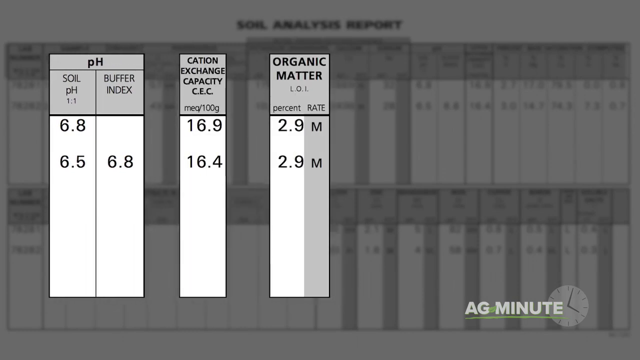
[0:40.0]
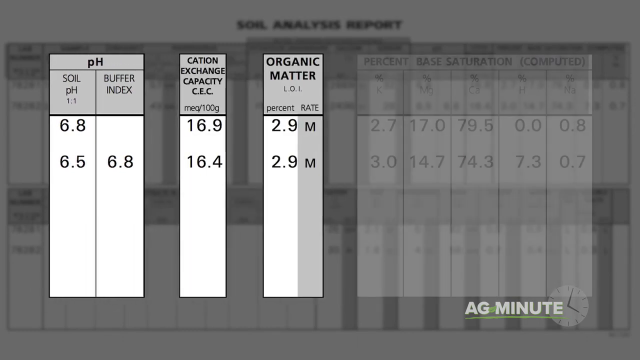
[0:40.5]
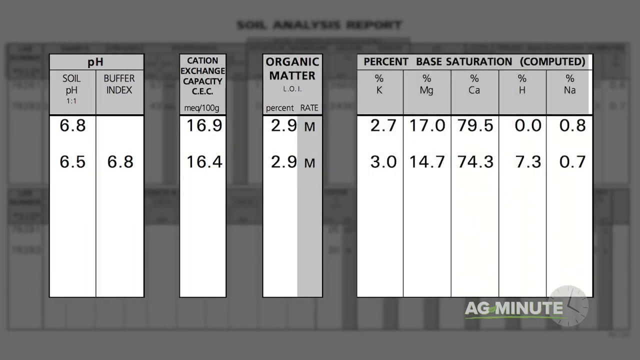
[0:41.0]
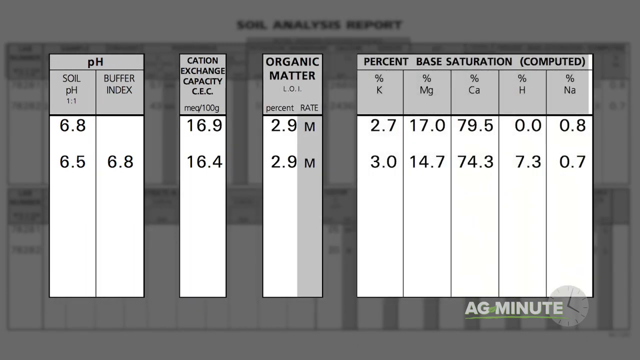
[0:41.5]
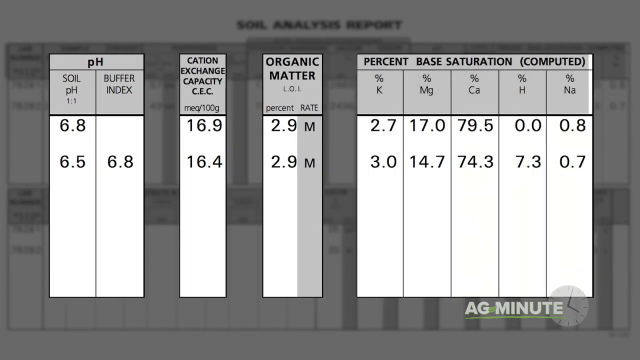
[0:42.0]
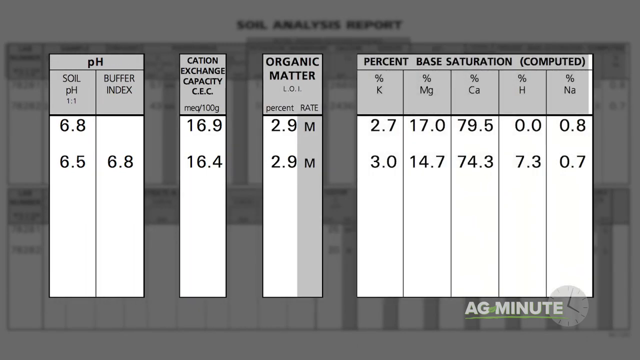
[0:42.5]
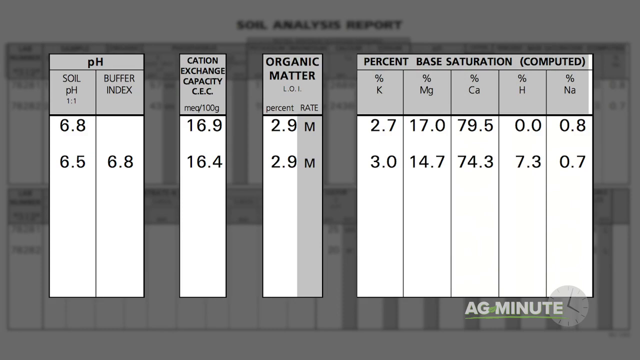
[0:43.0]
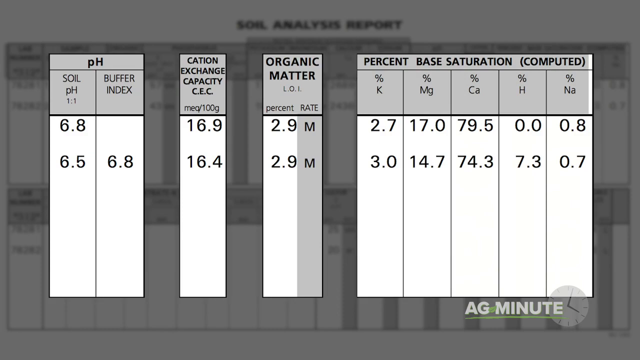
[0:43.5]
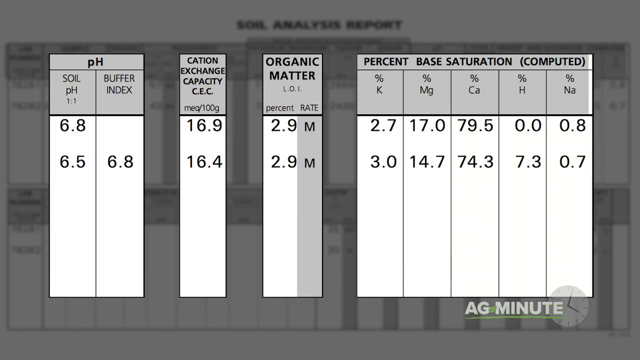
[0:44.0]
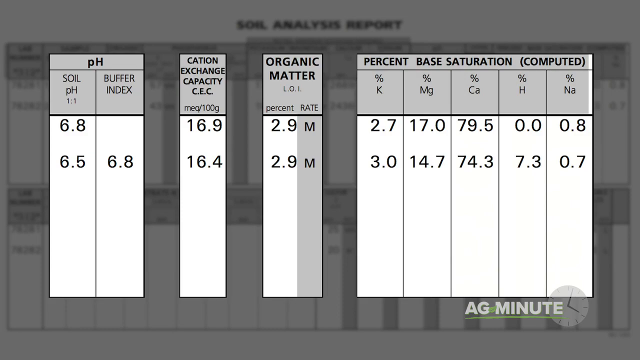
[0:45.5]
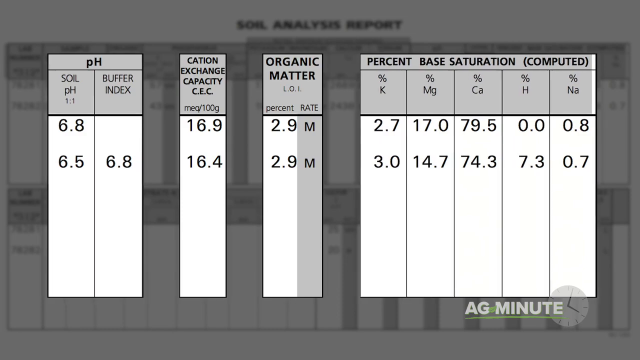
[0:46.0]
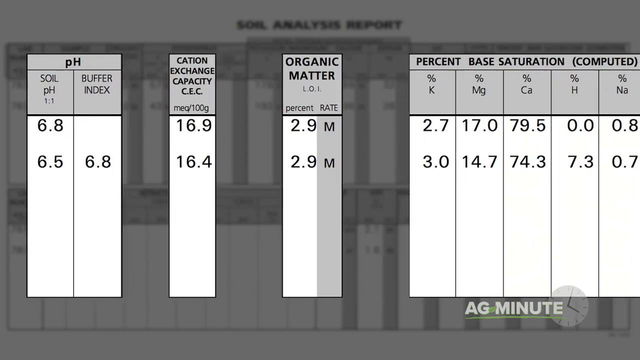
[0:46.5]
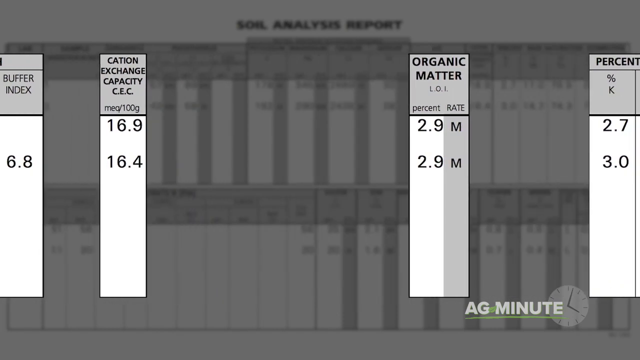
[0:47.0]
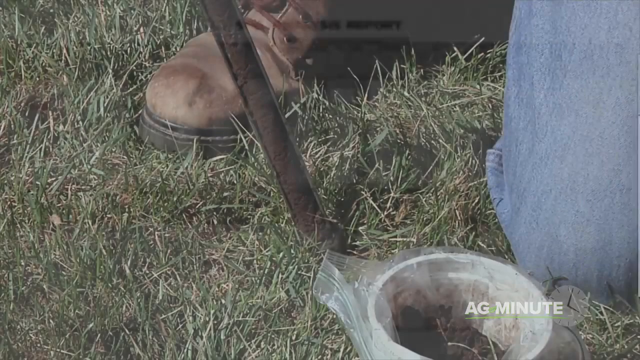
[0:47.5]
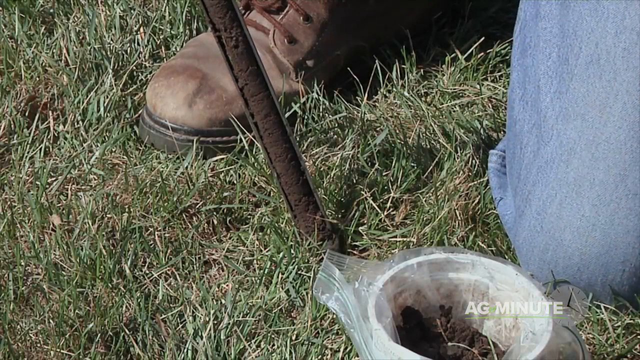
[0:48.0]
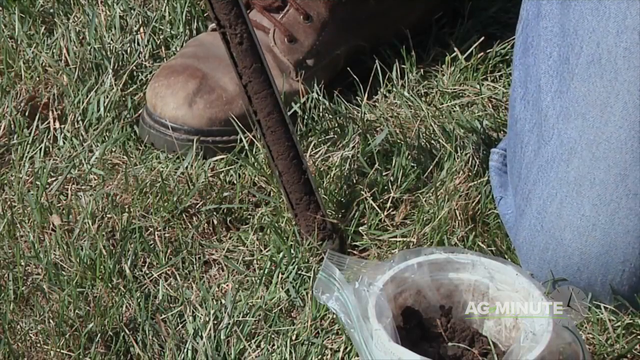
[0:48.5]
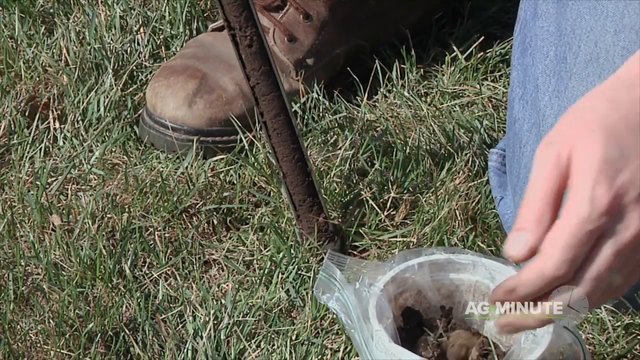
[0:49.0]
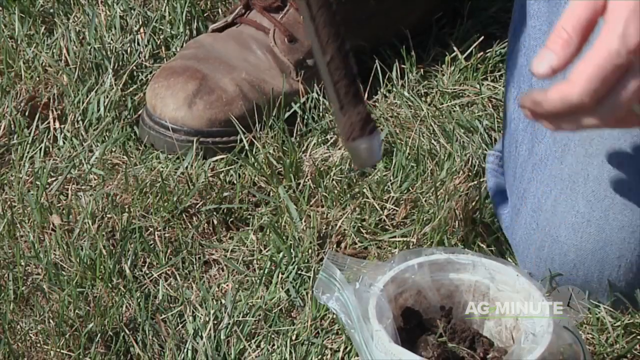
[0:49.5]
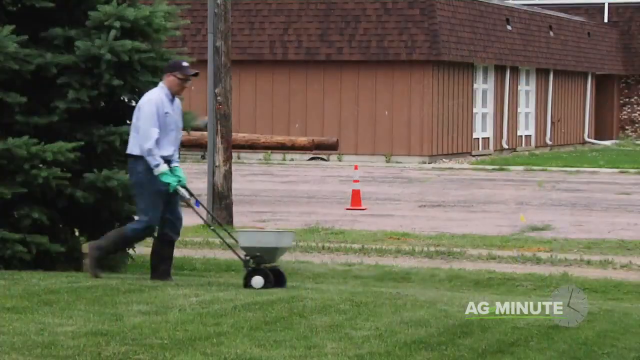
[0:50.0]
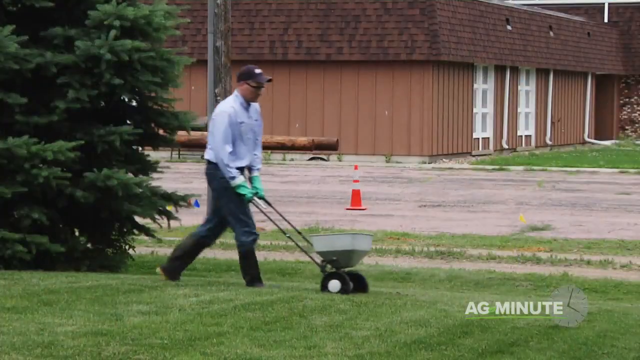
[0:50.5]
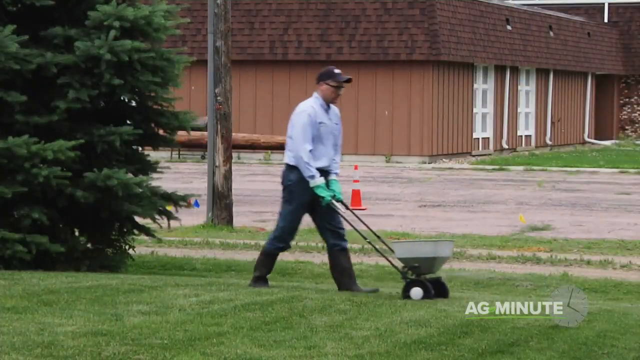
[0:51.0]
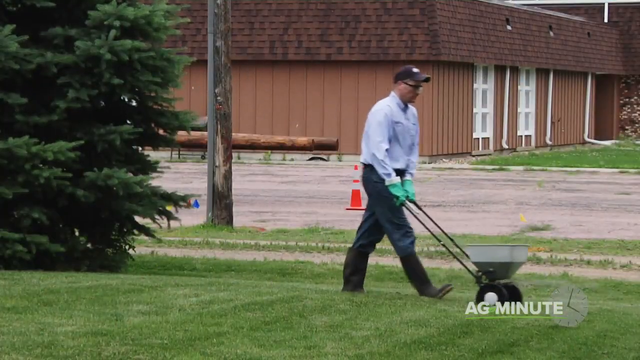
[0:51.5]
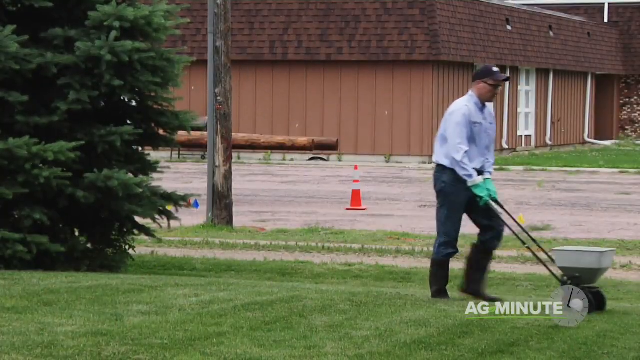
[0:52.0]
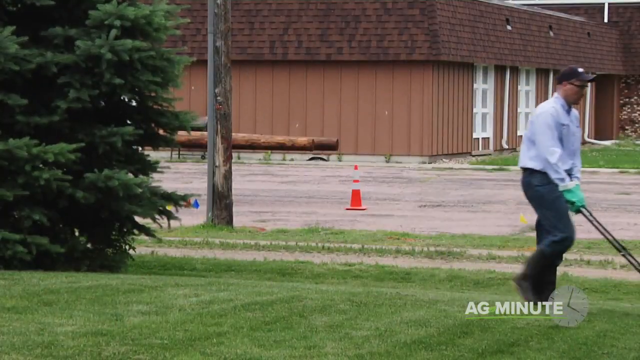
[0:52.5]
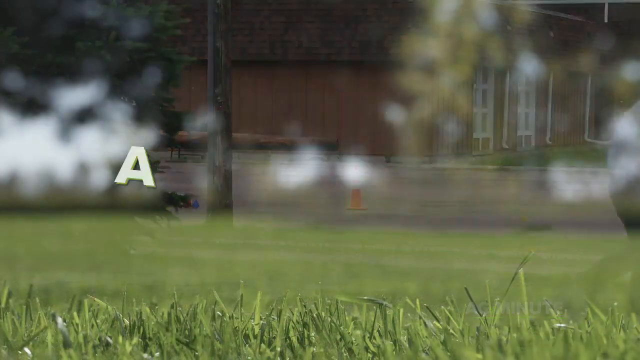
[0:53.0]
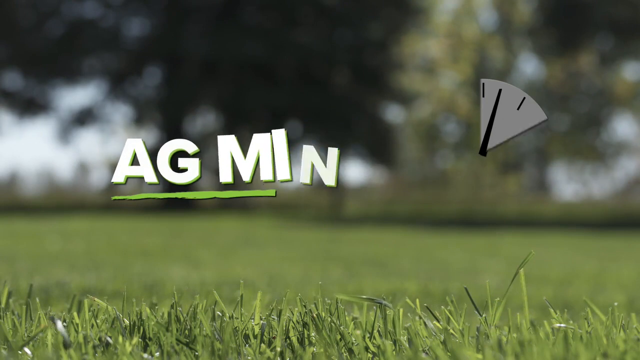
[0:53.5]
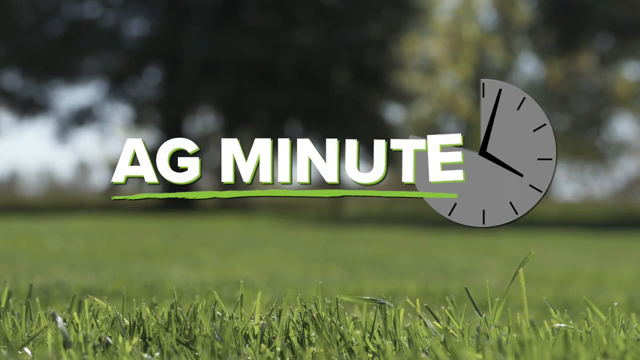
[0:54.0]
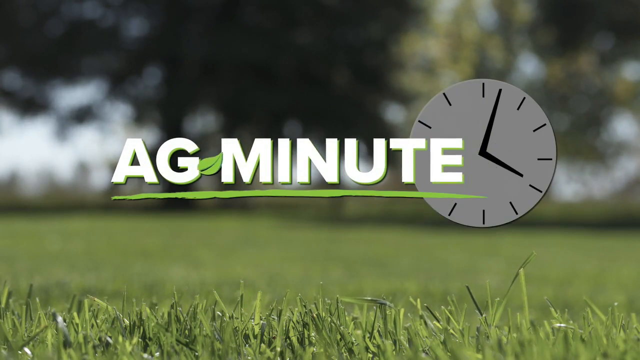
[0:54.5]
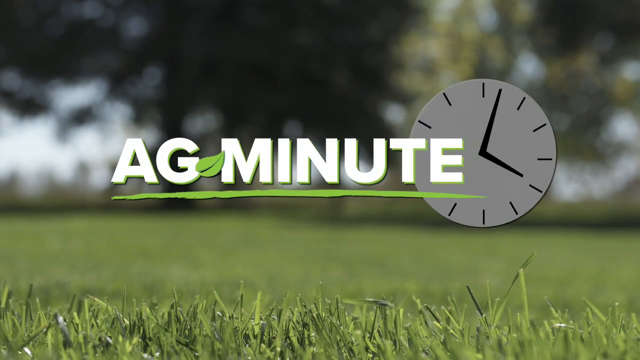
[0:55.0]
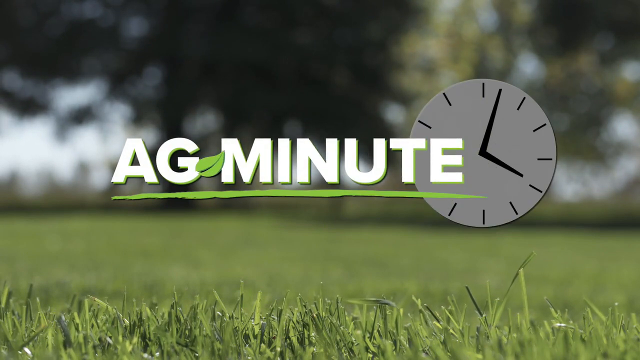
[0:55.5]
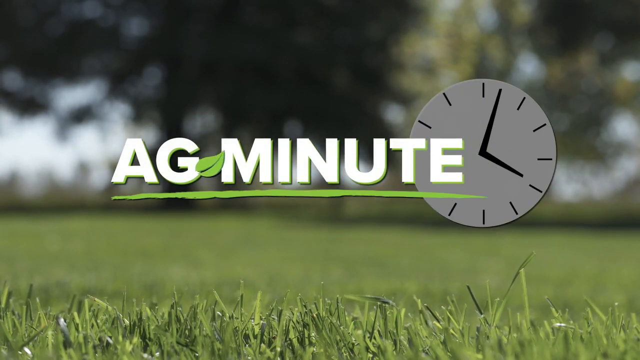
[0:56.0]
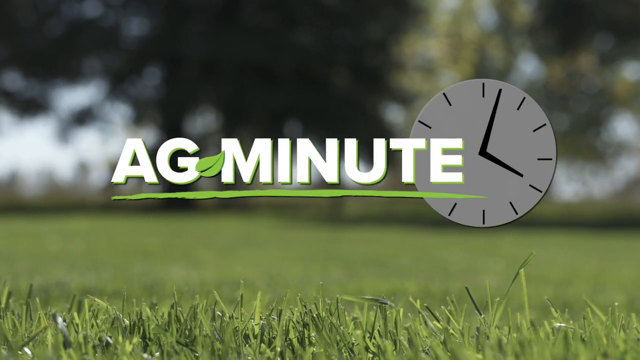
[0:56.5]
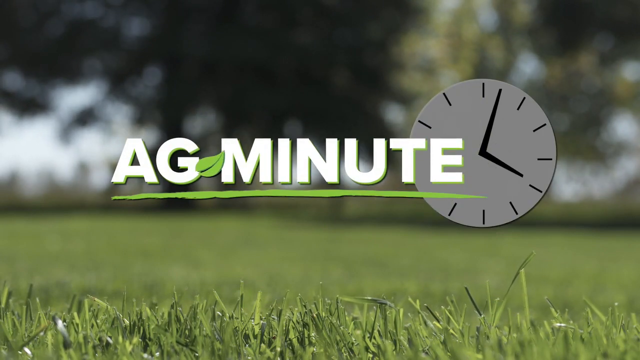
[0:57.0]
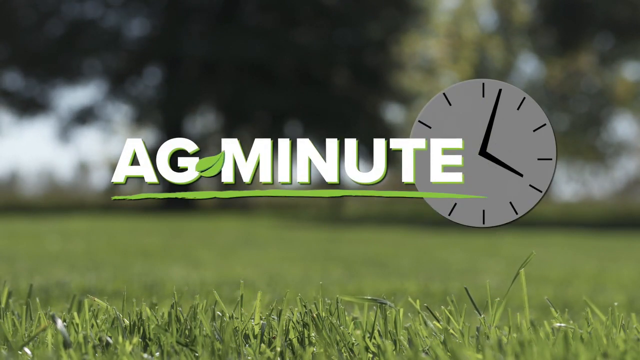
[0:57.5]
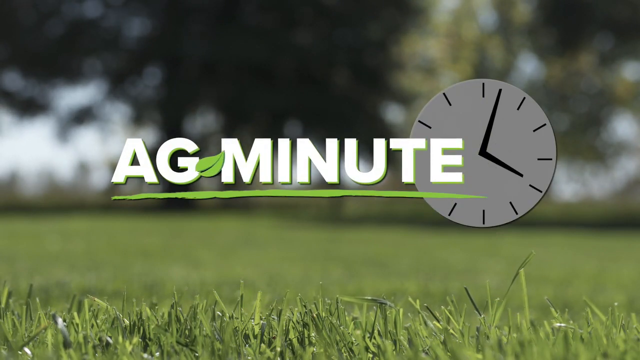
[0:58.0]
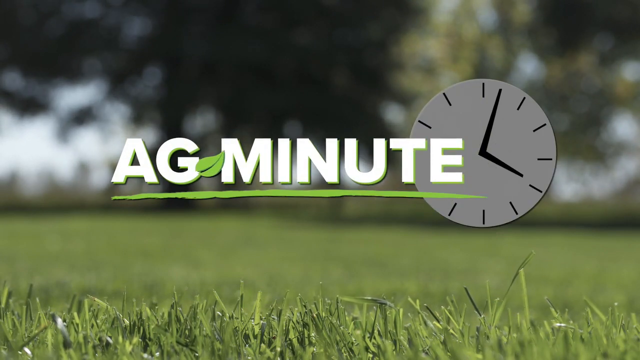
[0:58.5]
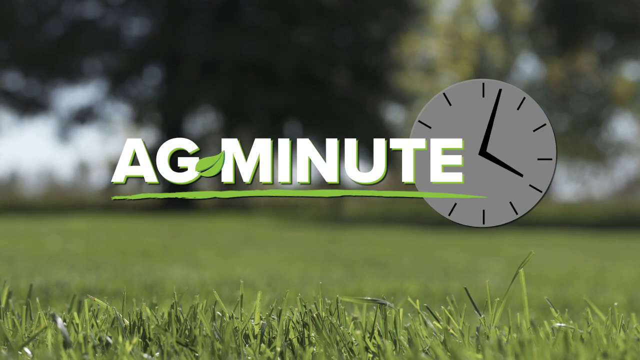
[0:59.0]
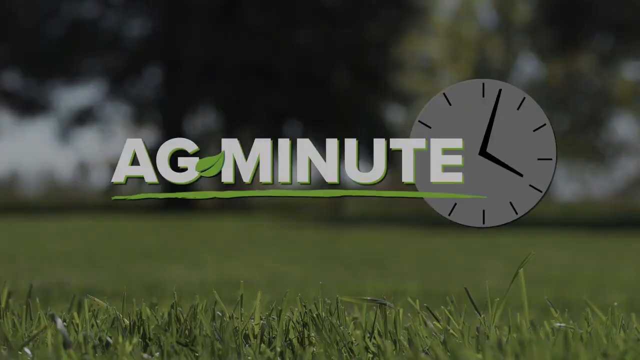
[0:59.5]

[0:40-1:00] The soil analysis report continues: the pH level of the soil is 6.8 and 6.5, and the buffer index is 6.8. Calcium exchange capacity shows 16.9 and 16.4, organic matter is 2.9, and percent K is 2.7 and 3.0. Base saturation is 79.5 and 74.3, H level is 0 and 7.3, and N level is 0.8 and 2.7. A person is shown collecting soil from the beach.